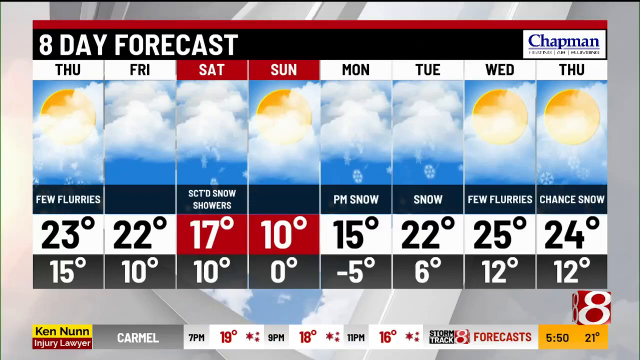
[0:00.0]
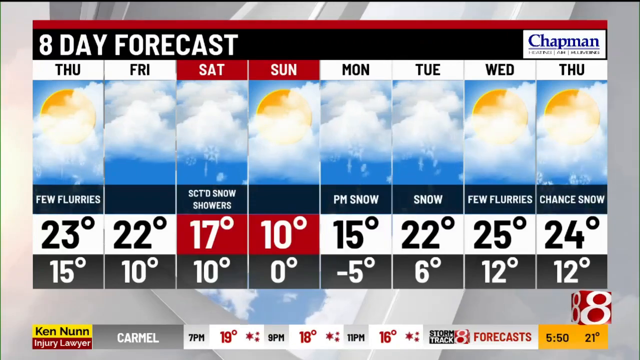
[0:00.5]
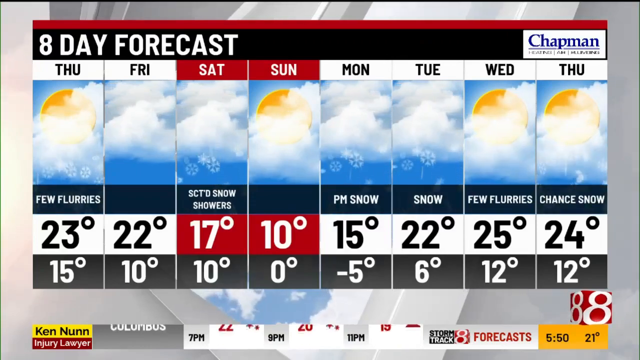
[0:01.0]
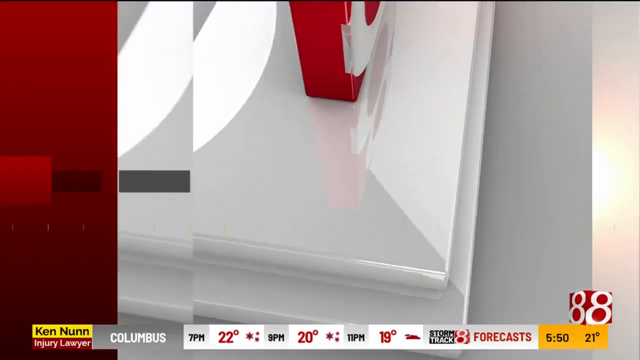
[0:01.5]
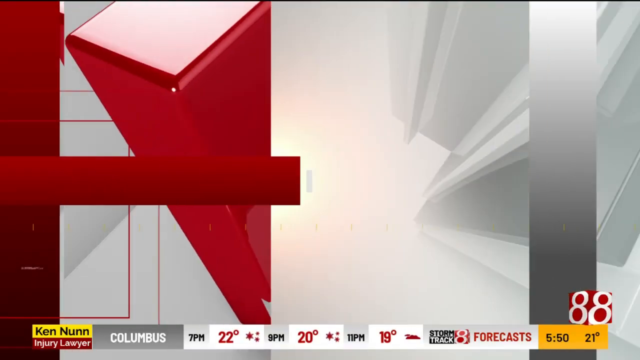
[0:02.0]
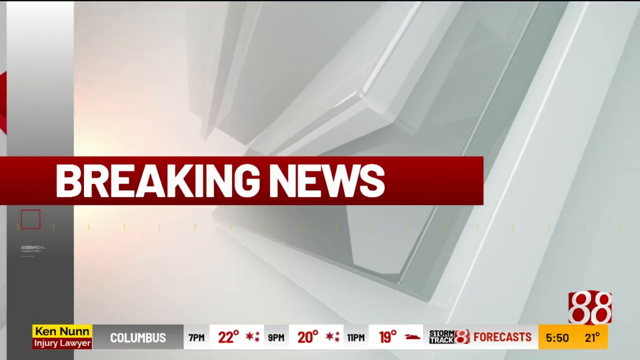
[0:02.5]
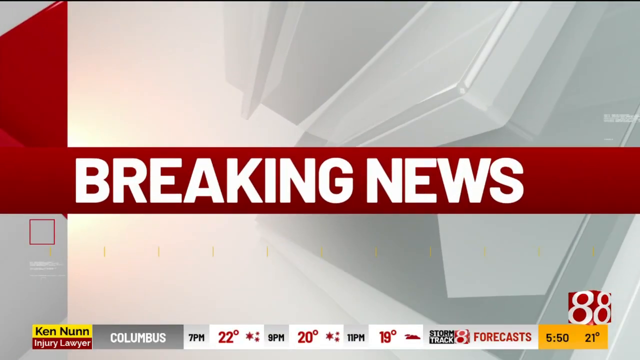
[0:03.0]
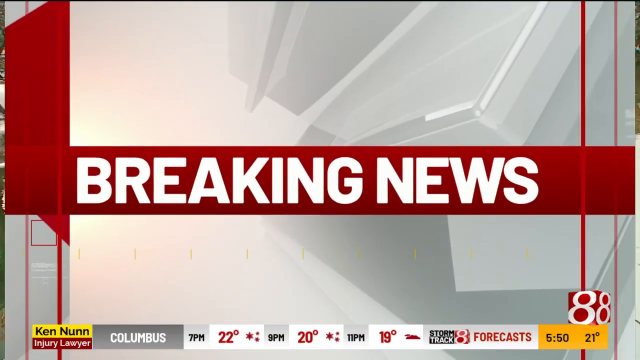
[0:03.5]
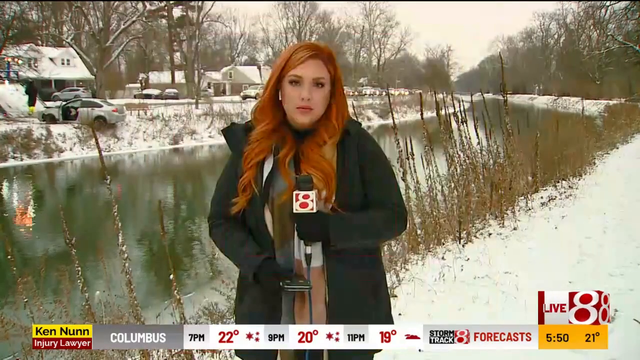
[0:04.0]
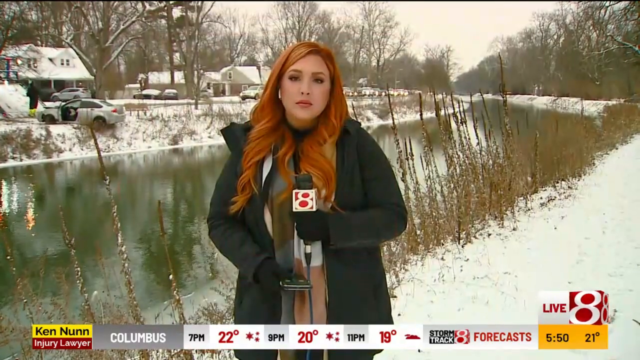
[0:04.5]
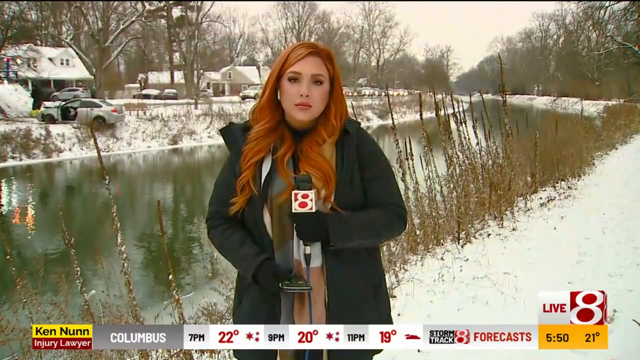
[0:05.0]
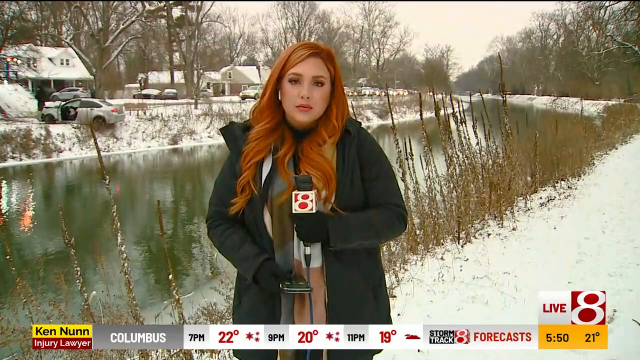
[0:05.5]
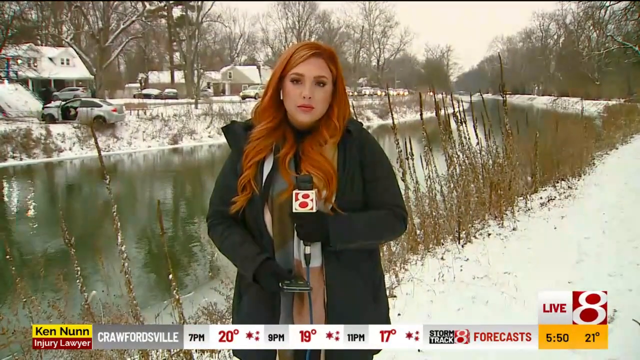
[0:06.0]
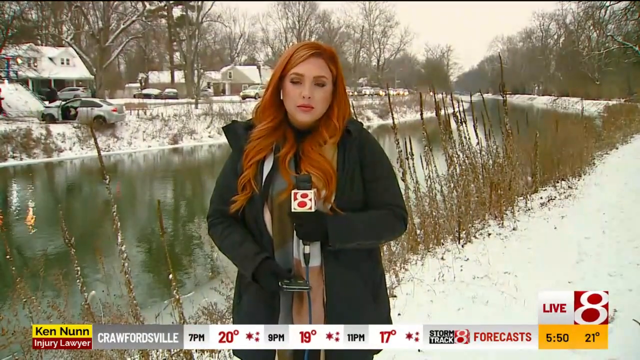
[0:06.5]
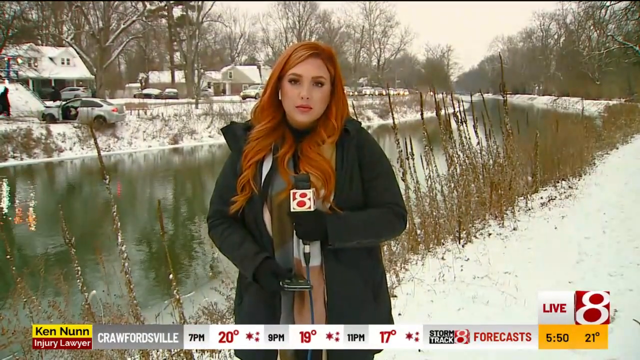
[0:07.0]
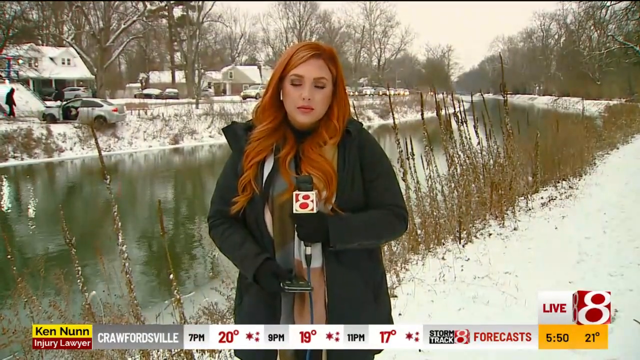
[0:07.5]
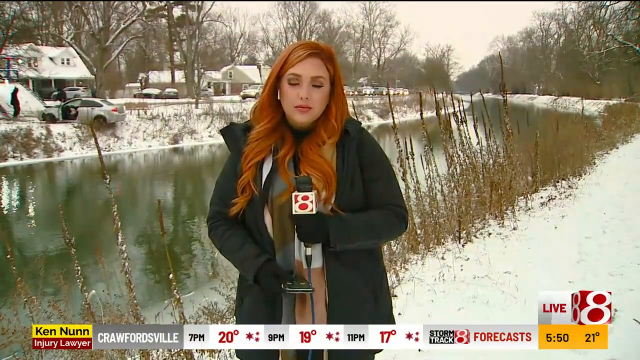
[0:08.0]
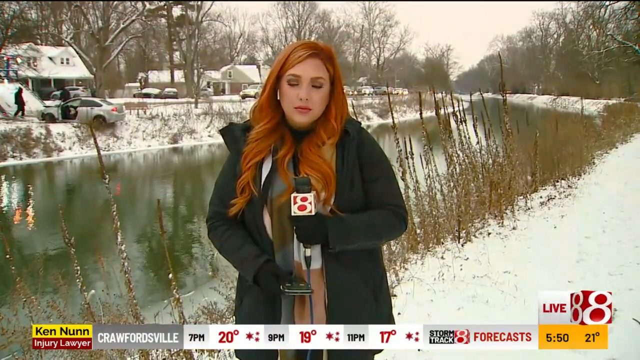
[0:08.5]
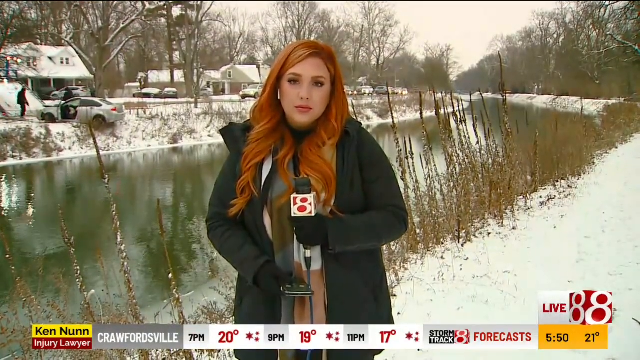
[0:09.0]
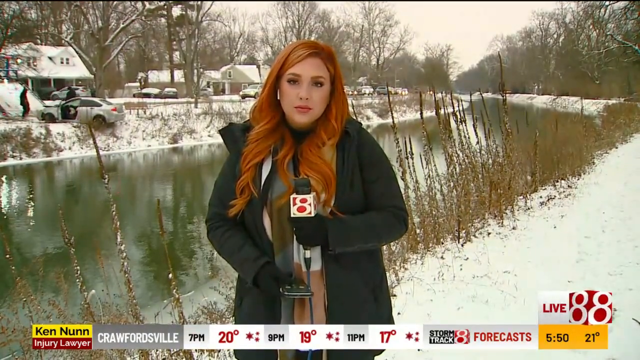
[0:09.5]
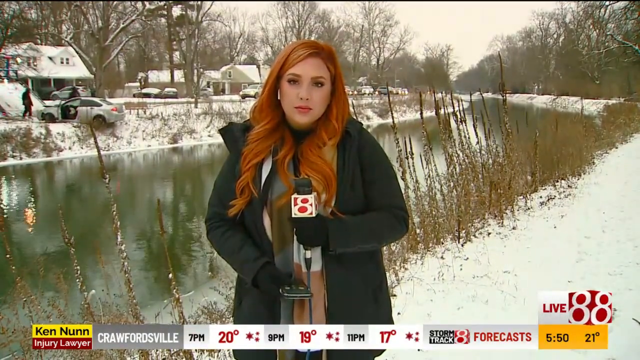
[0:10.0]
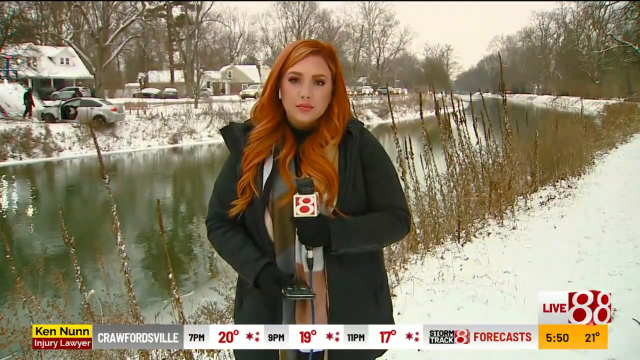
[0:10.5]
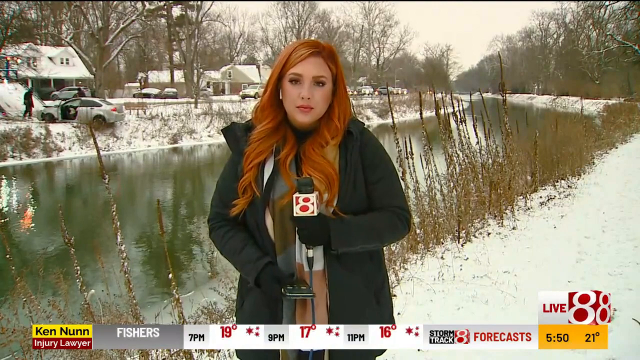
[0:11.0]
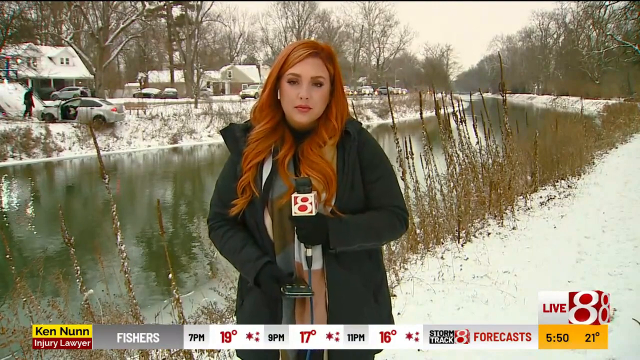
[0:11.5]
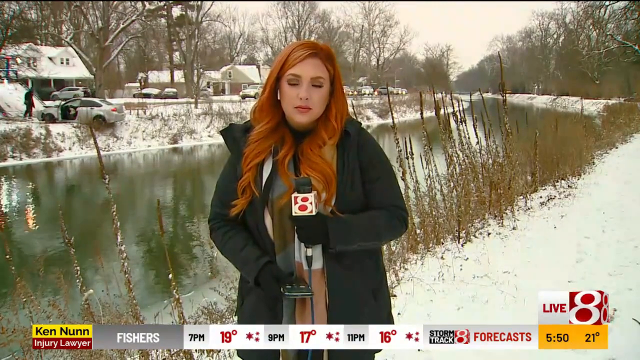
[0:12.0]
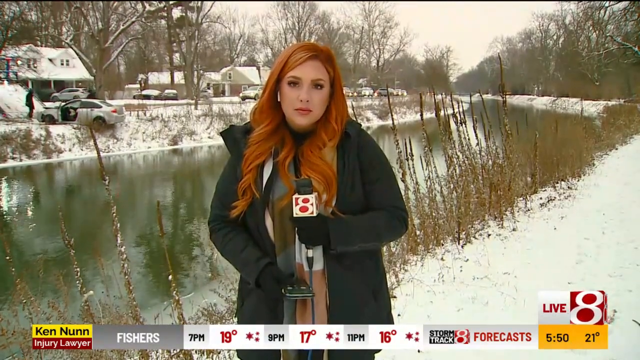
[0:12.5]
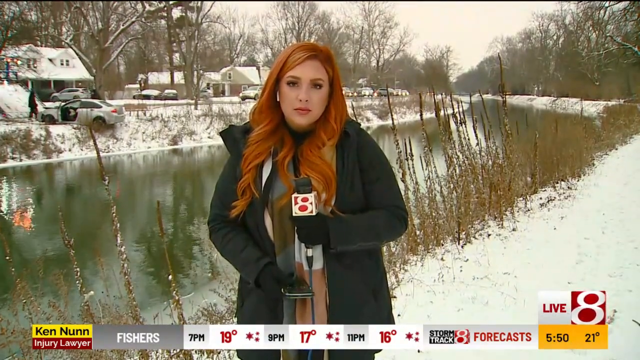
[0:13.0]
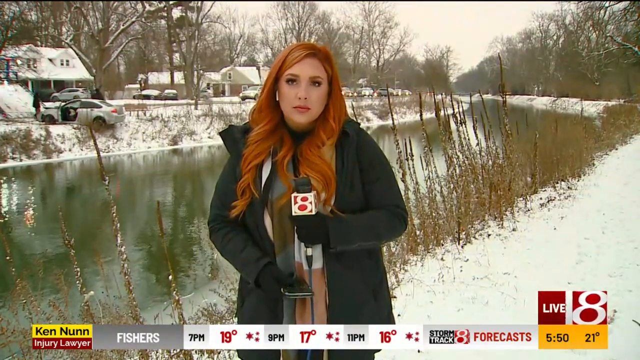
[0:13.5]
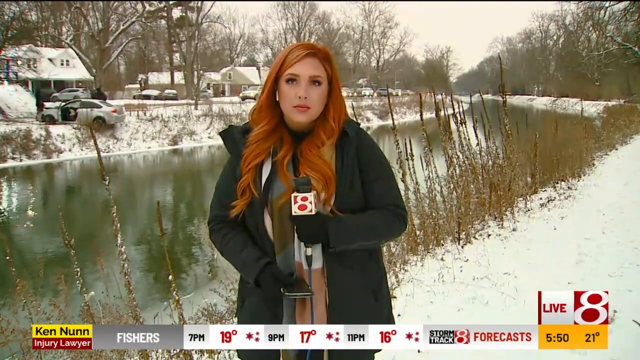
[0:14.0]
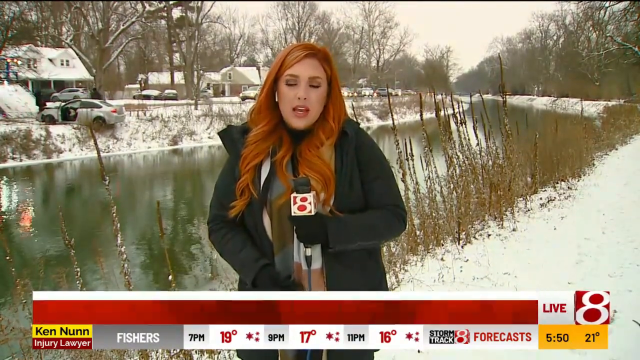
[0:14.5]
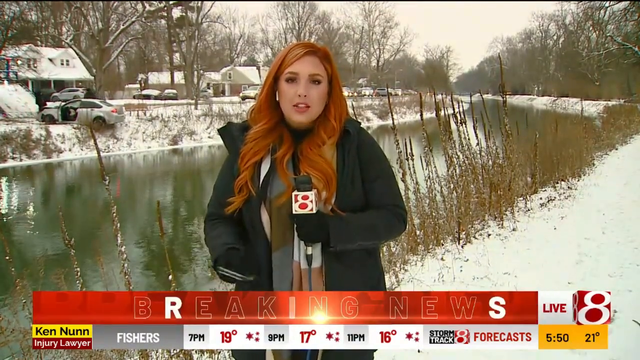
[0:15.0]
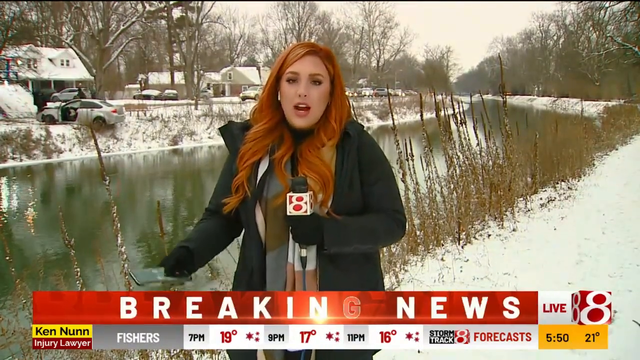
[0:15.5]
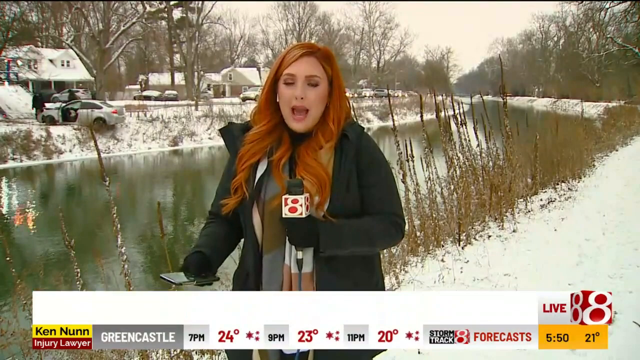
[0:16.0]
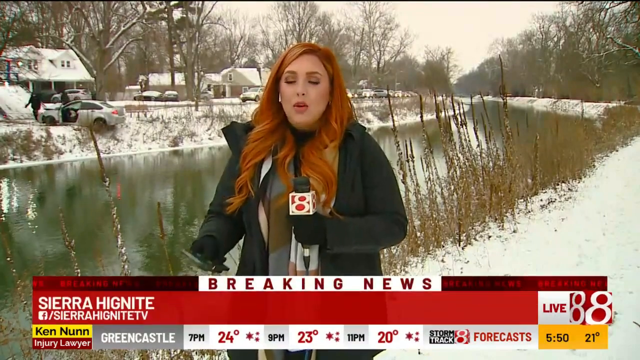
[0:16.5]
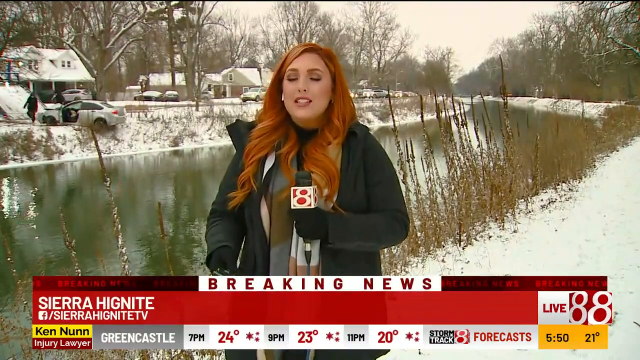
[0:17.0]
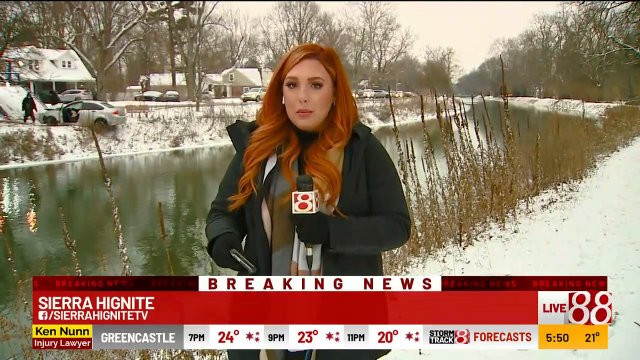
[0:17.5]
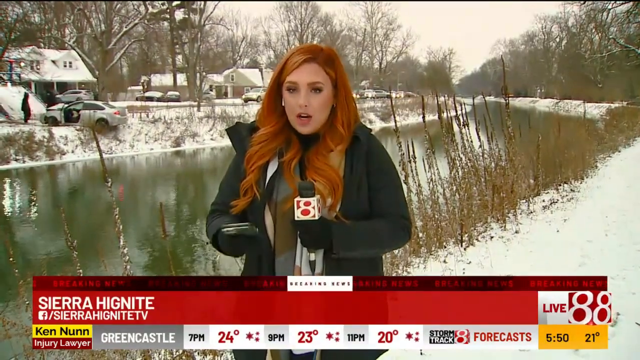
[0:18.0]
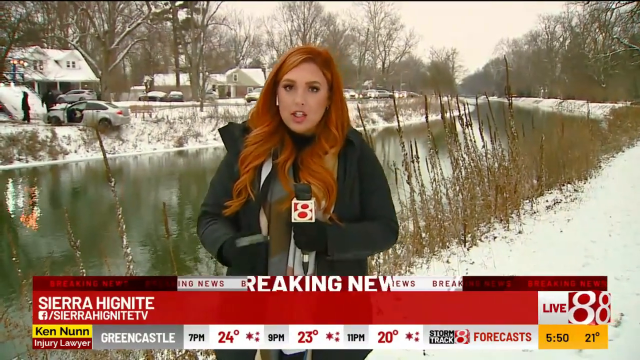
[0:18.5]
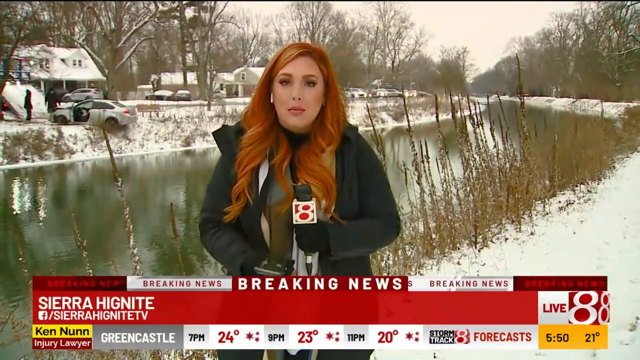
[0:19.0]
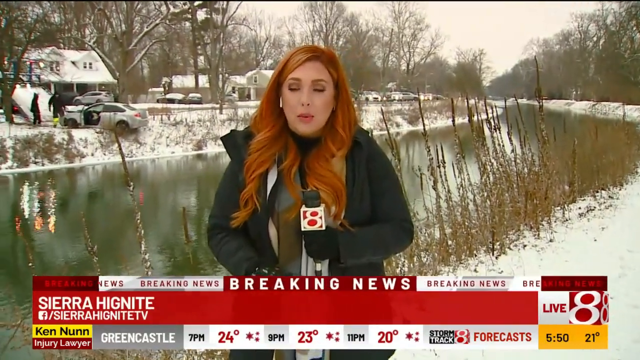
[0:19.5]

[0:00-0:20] An eight-day weather forecast appears, listing Thursday, Friday, Saturday, Sunday, Monday, Tuesday and Wednesday, with the high and low for each day and a description of that day's weather. For Thursday there is a sun with cloud around it and the words "a few flurries", apparently meaning snow flurries, with a high of 23 degrees Fahrenheit and a low of 15 degrees Fahrenheit. At the weekend the high is as low as 17 and the low is 10. On Sunday the high is 10 and the low is 0. The video then cuts to breaking news: a female news reporter is outside in a frozen scene, standing beside a river and looking at the camera.